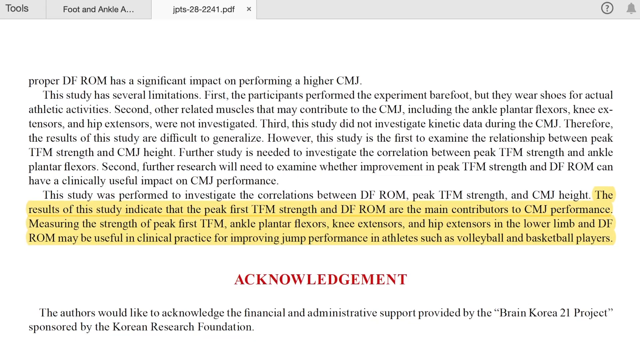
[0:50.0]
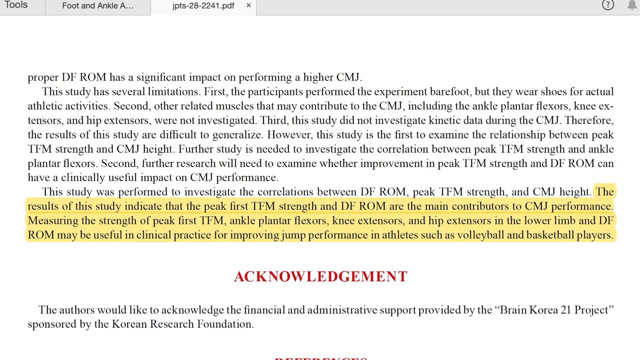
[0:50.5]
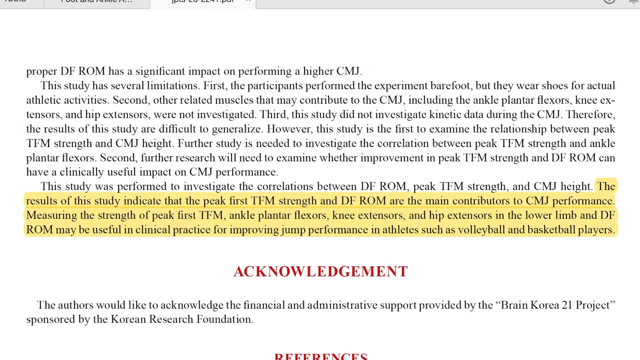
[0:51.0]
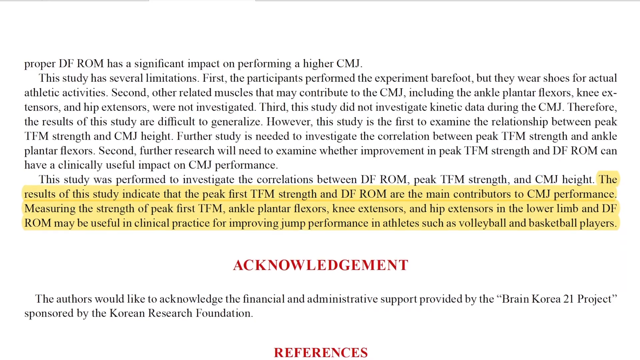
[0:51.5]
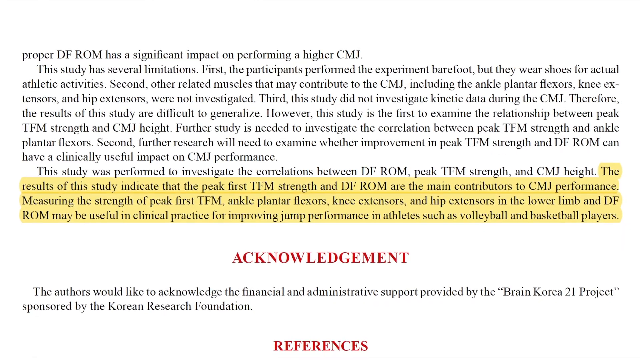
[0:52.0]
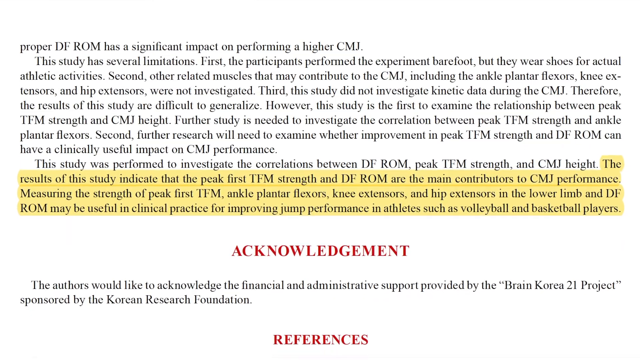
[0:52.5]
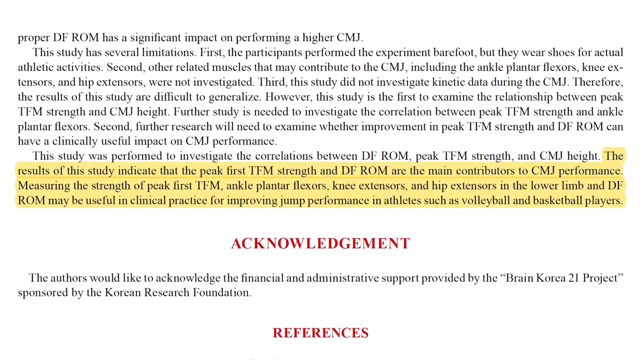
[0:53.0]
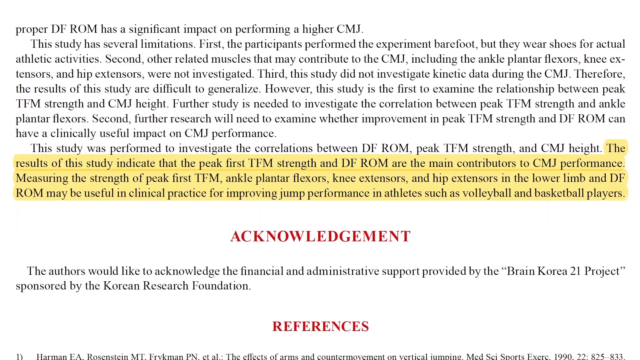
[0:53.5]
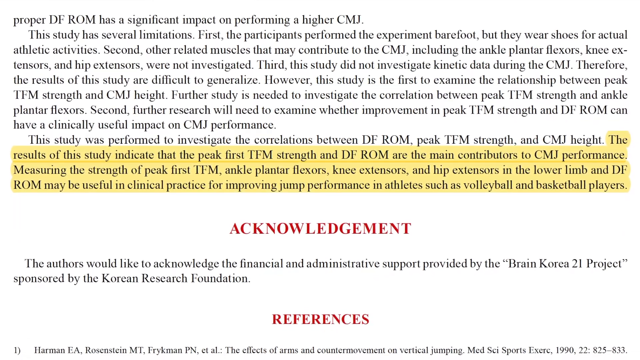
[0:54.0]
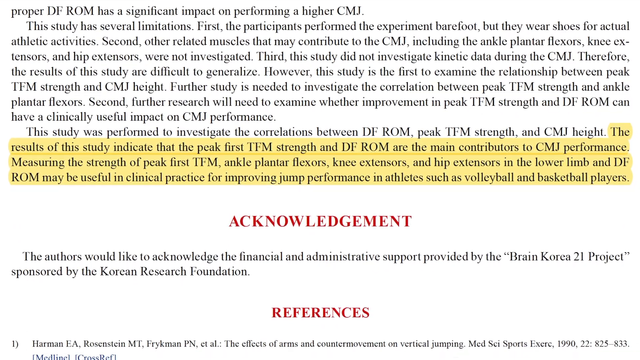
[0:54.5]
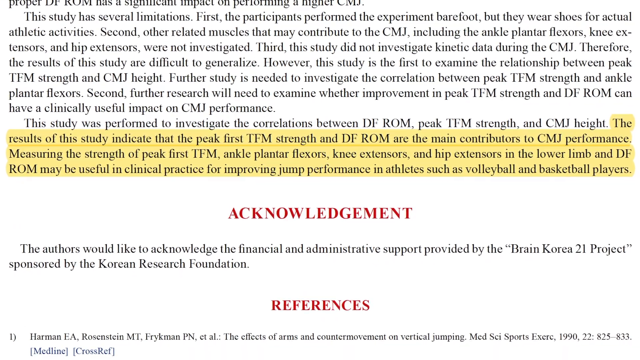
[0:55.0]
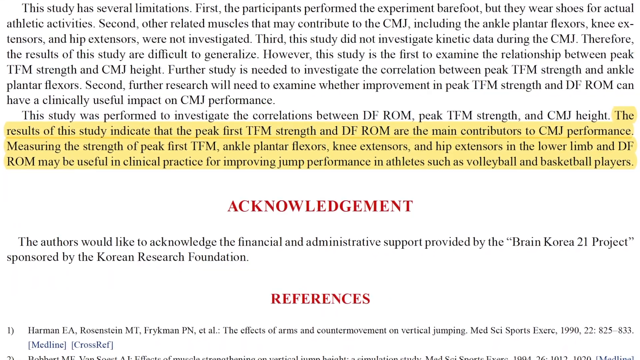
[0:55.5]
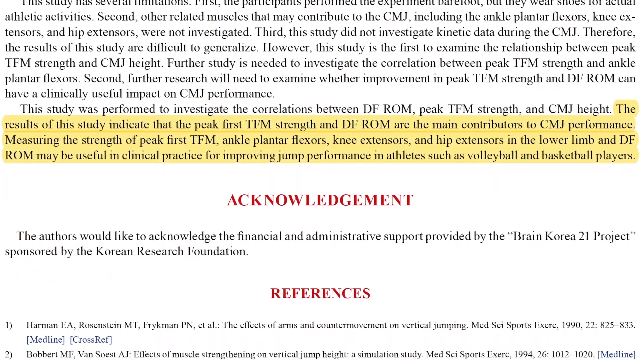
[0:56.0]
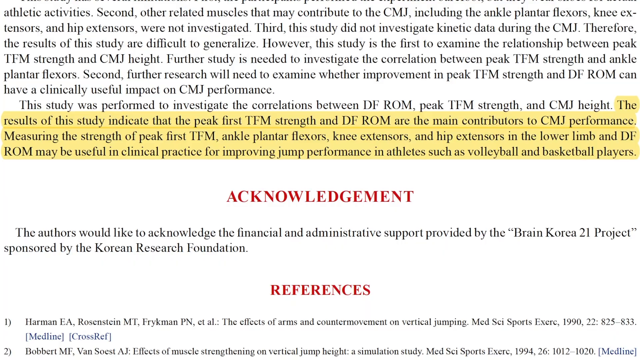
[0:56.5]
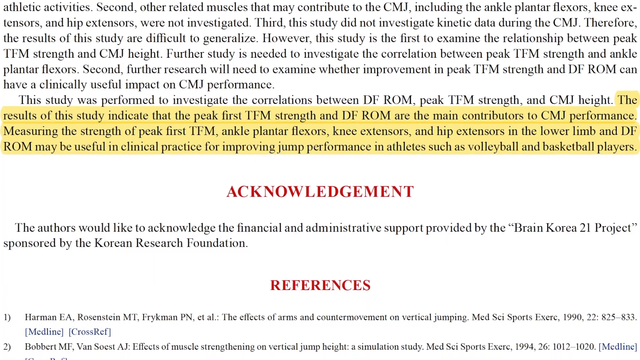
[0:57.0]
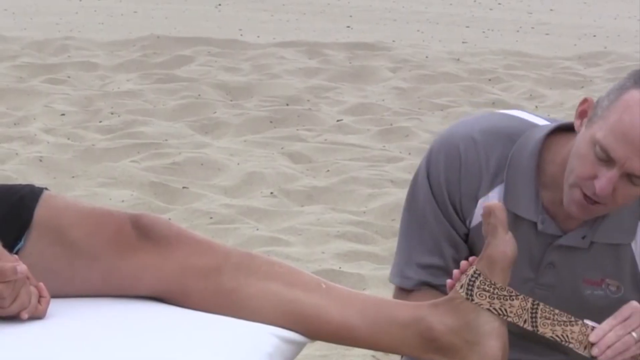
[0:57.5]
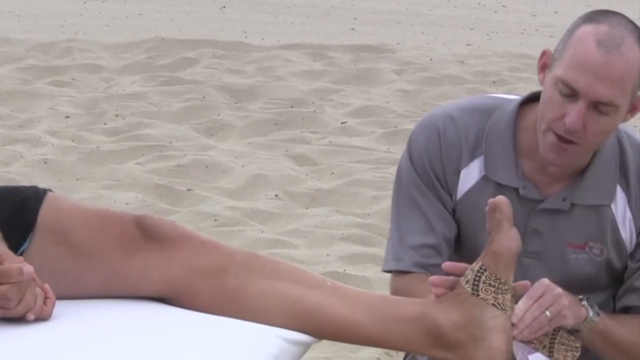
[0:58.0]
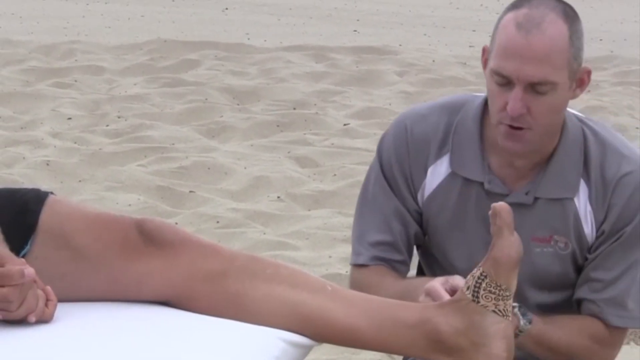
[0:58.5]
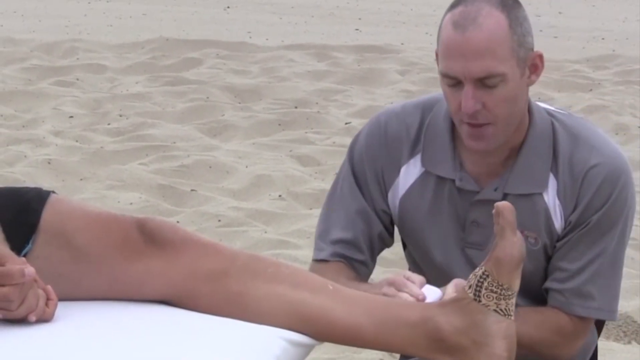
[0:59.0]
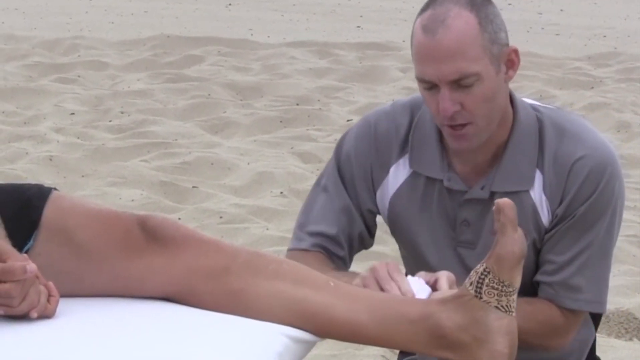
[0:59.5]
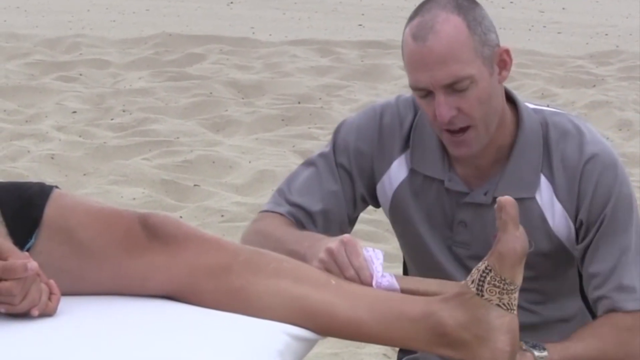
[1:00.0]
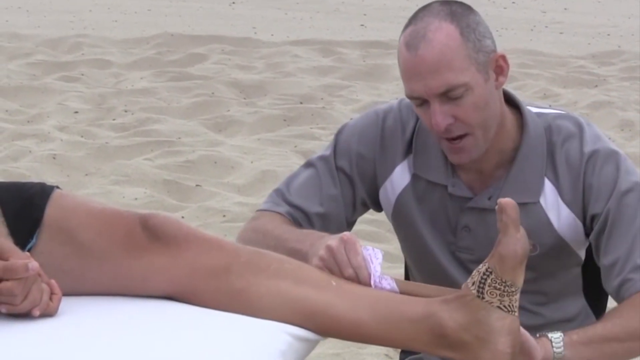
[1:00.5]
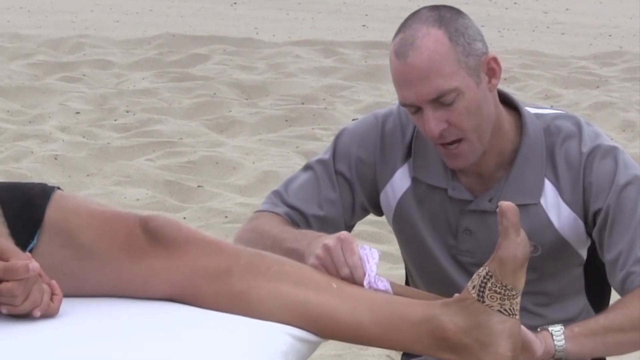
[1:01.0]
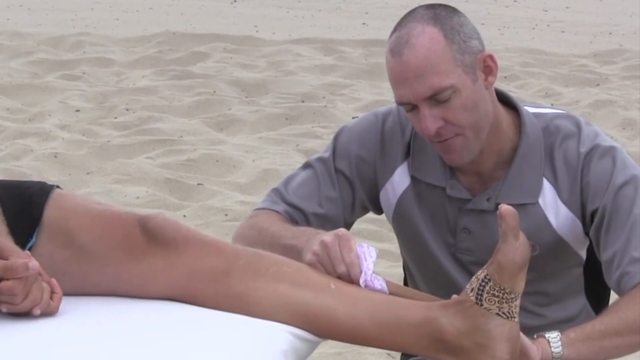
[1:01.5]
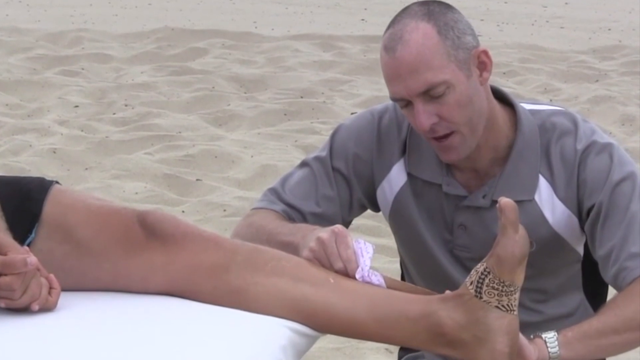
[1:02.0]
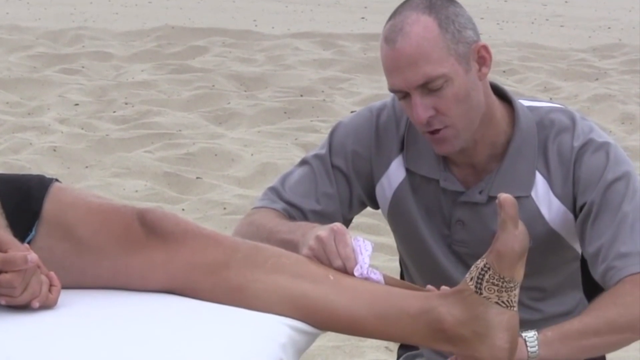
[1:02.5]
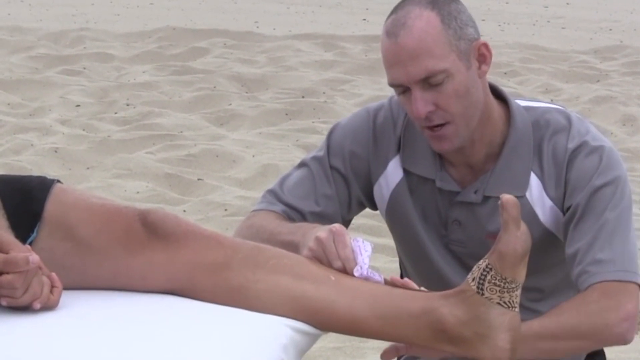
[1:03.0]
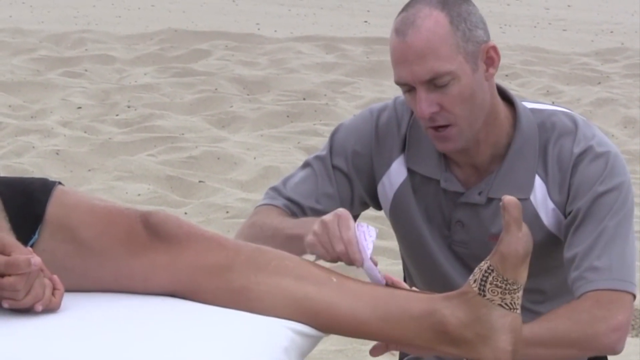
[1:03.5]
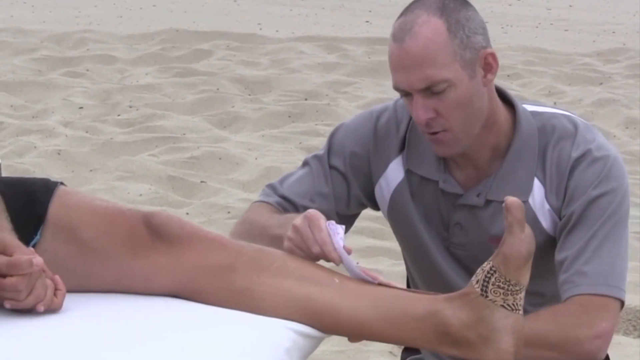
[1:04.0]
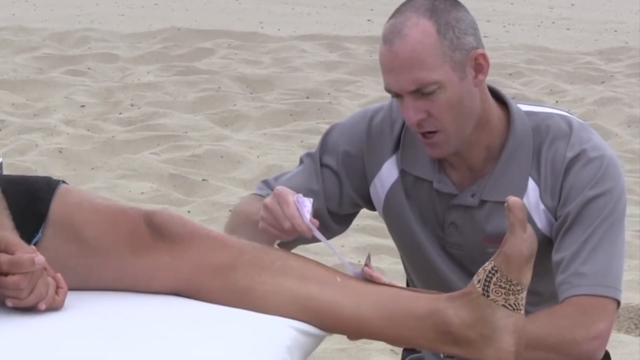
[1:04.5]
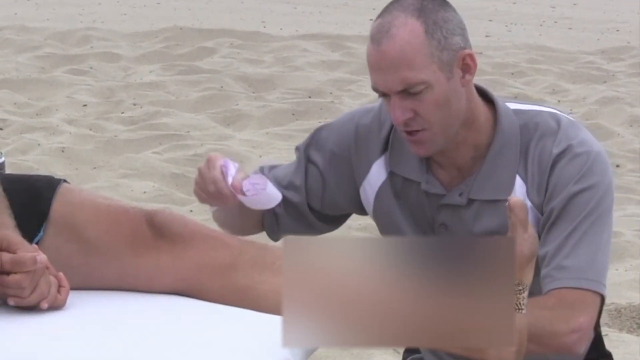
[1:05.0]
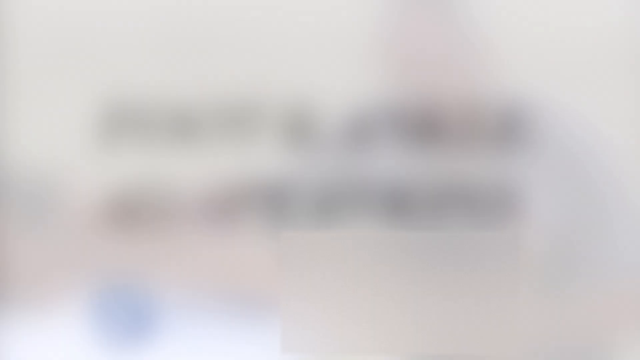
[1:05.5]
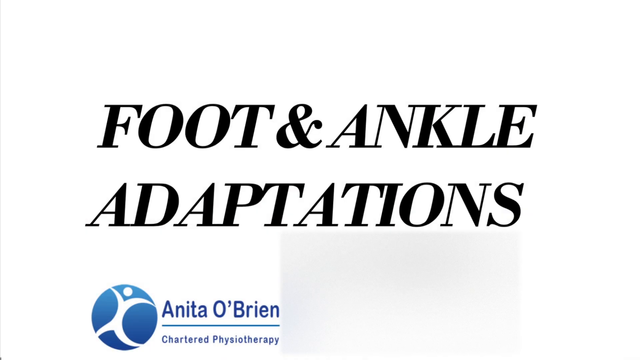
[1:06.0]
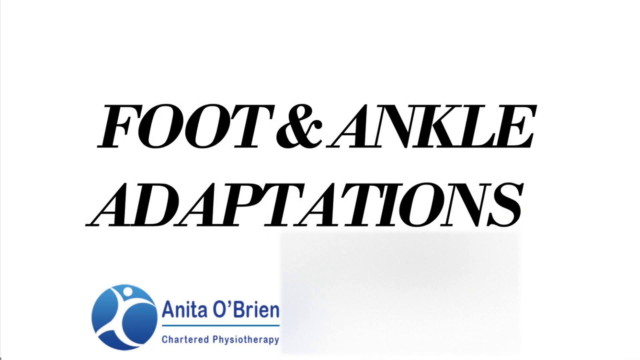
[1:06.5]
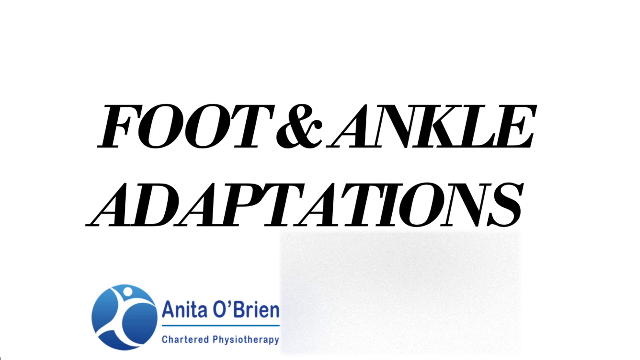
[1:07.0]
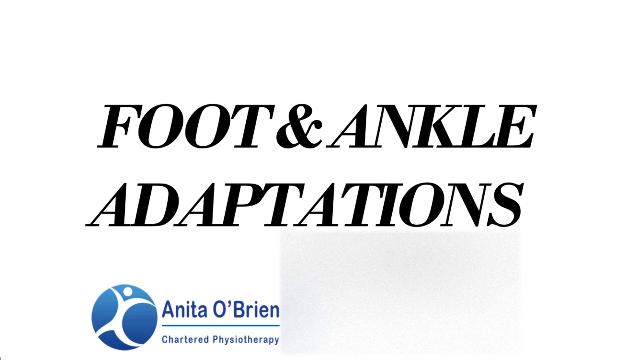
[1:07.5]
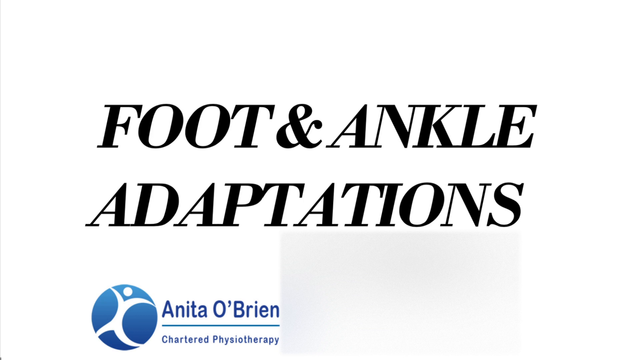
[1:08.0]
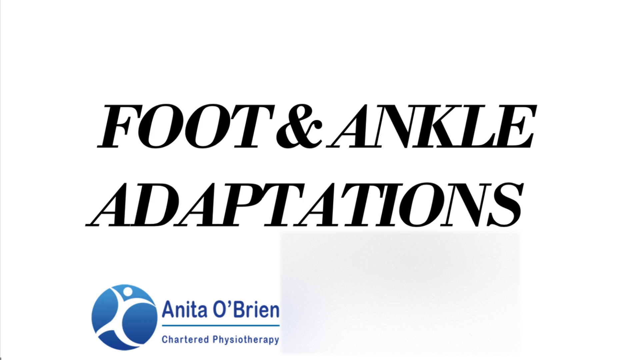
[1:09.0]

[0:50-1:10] A web page shows the word "acknowledgement" in red in the middle of the page. Above it, highlighted in yellow, the text says "the results of this study indicate that the peak first TFM strength and DF ROM are the main contributors to CMJ performance", followed by a sentence ending "may be useful in clinical practice for improving jump performance in athletes such as volleyball and basketball players". The video then cuts to a beach with a background of nothing but light tan sand. There is a bench with a person's left leg up on it, and at the bottom of the leg a man in a short-sleeved gray shirt is knelt down, wrapping the foot with a bandage.